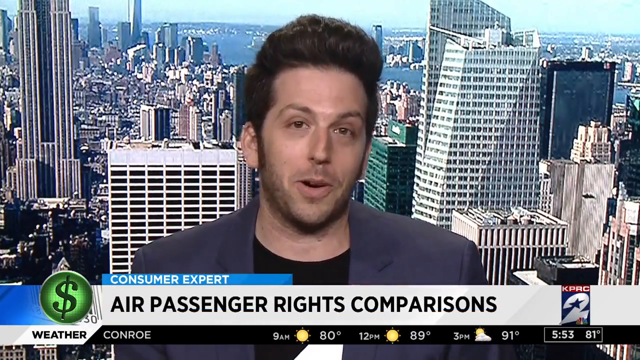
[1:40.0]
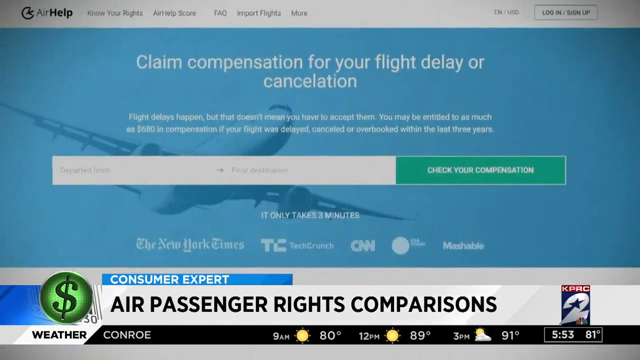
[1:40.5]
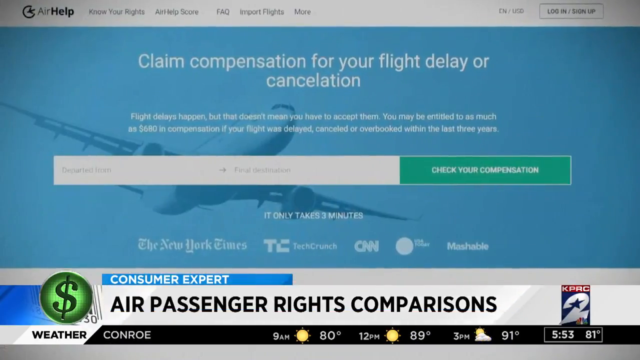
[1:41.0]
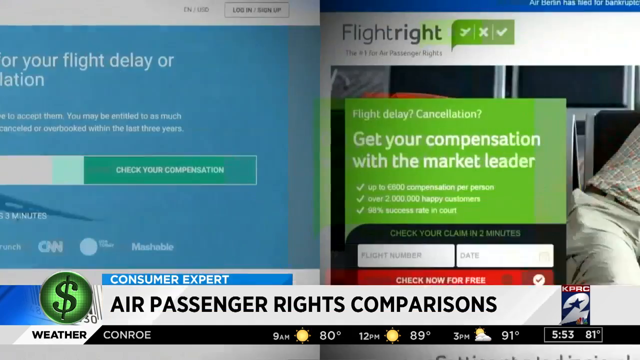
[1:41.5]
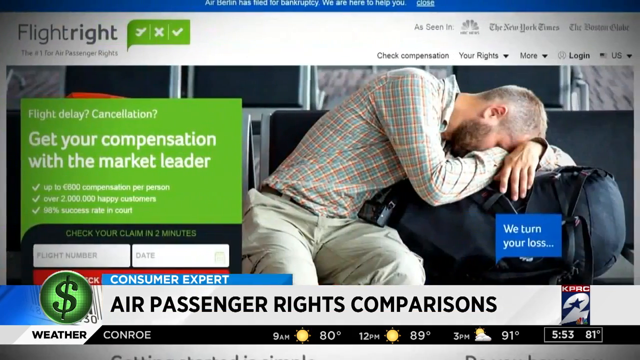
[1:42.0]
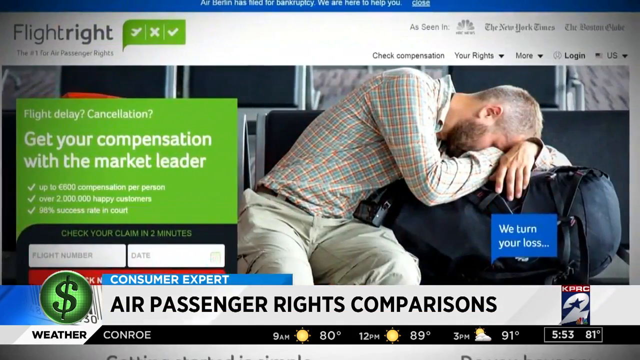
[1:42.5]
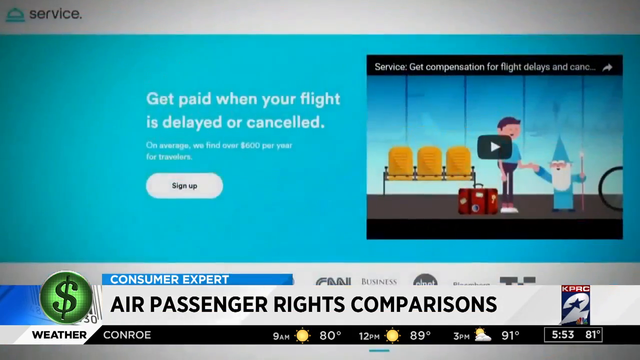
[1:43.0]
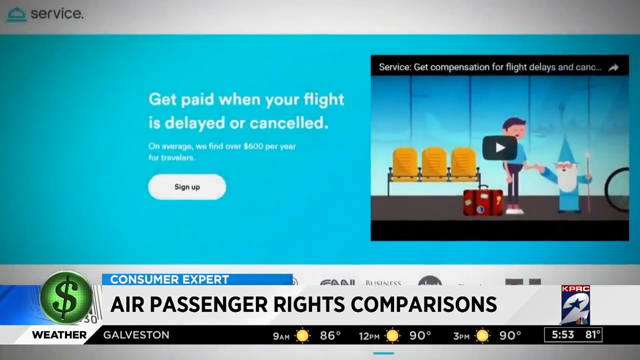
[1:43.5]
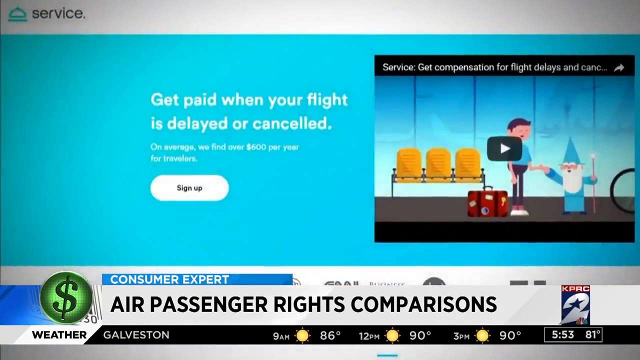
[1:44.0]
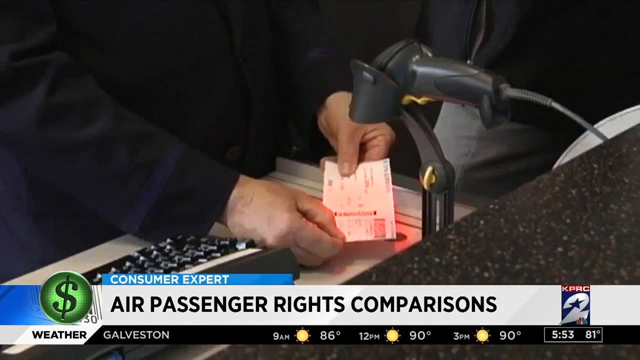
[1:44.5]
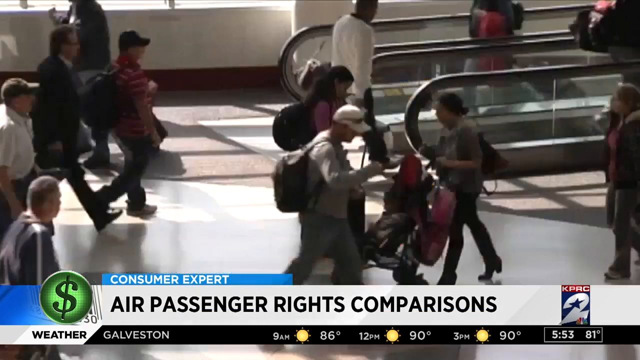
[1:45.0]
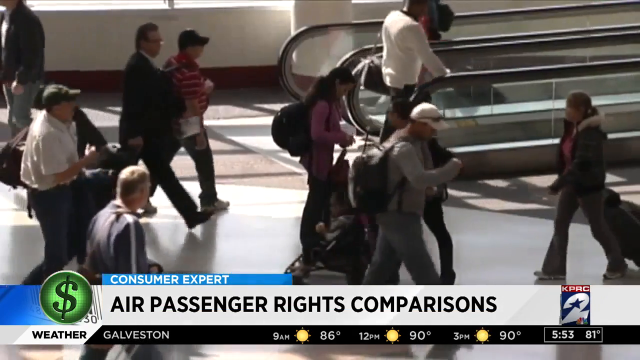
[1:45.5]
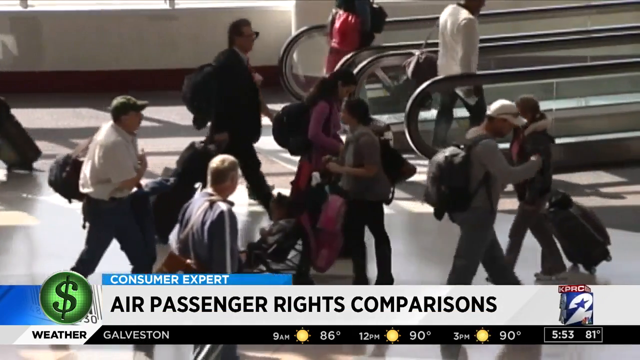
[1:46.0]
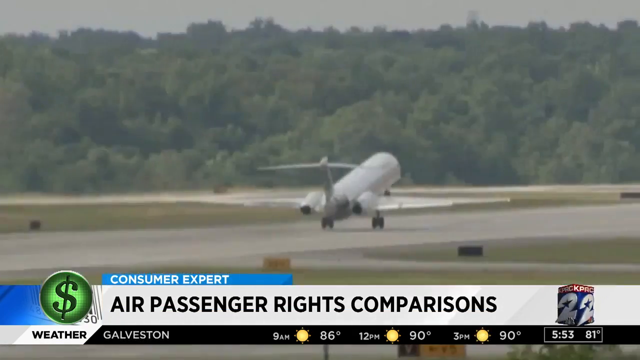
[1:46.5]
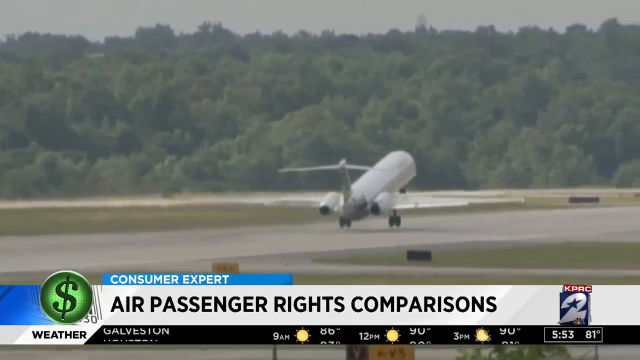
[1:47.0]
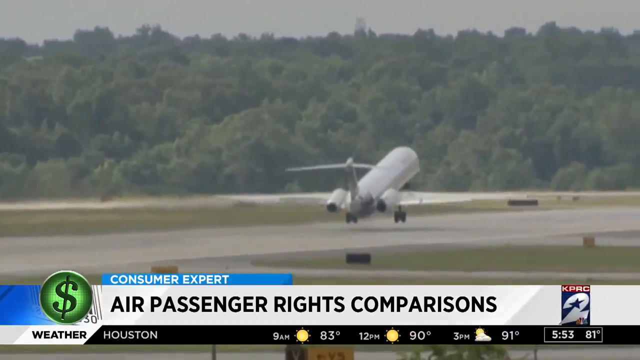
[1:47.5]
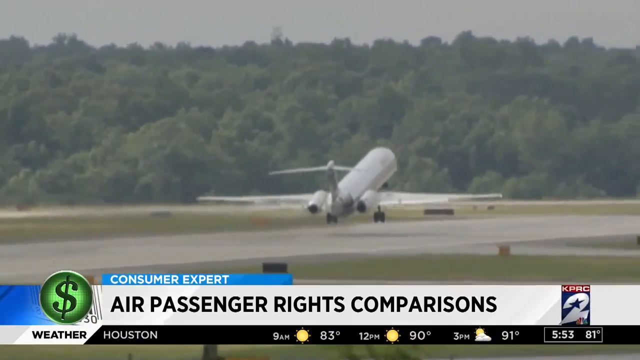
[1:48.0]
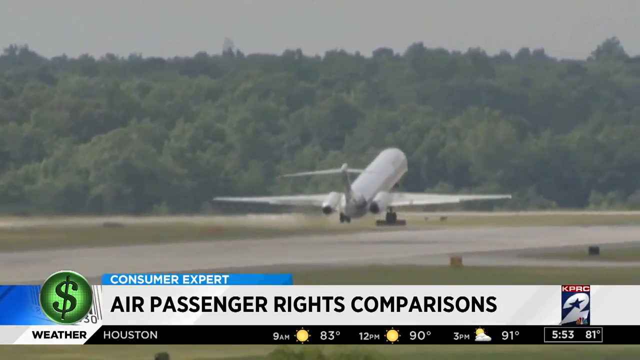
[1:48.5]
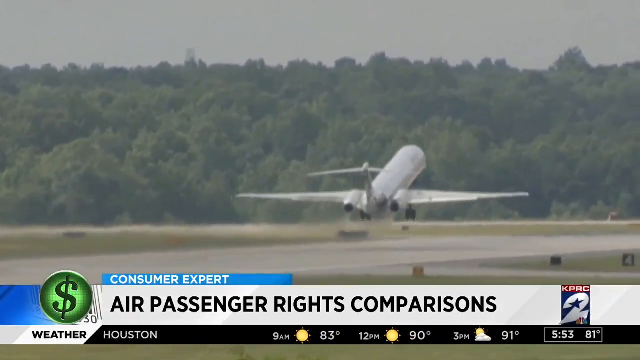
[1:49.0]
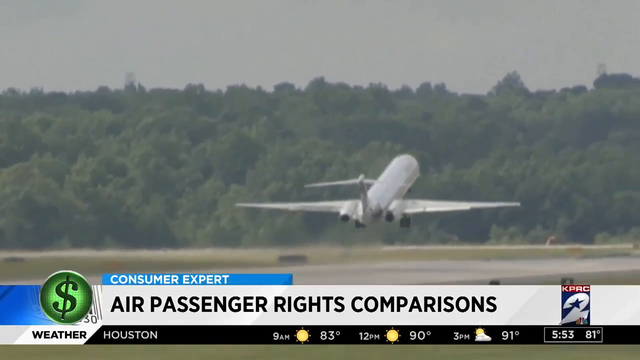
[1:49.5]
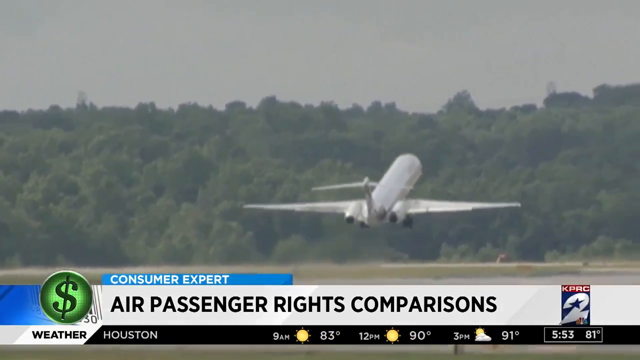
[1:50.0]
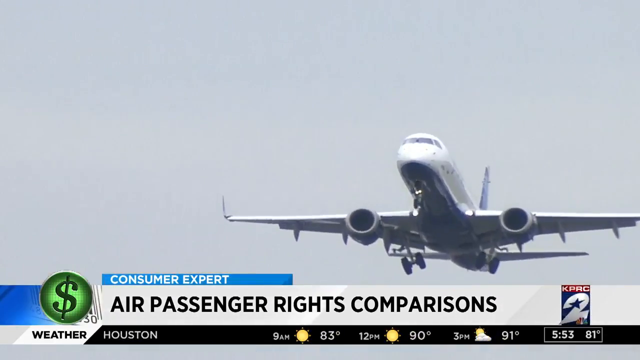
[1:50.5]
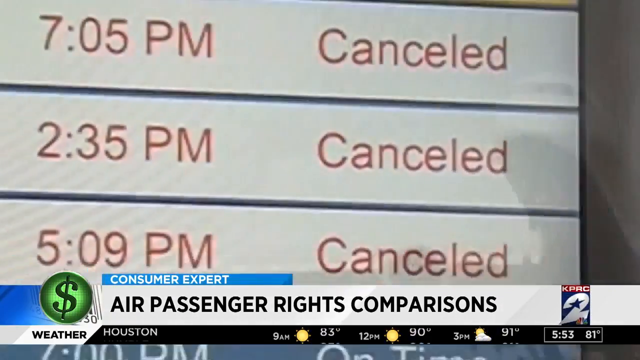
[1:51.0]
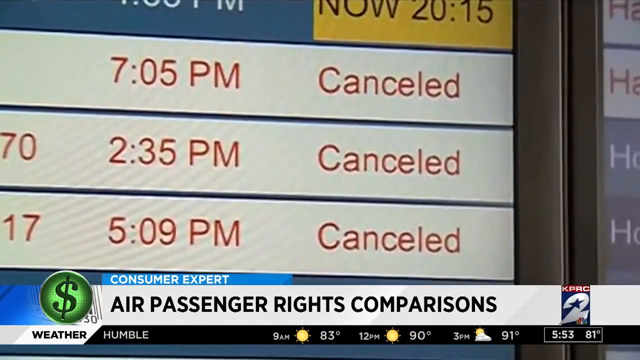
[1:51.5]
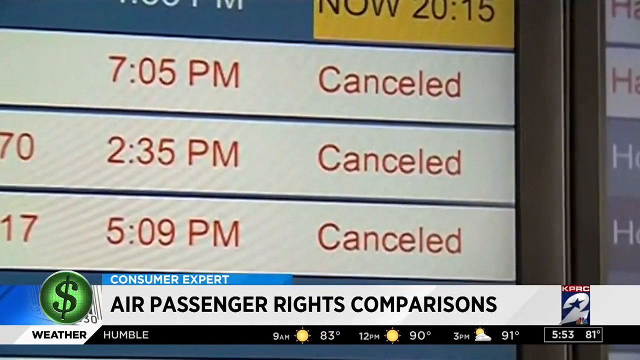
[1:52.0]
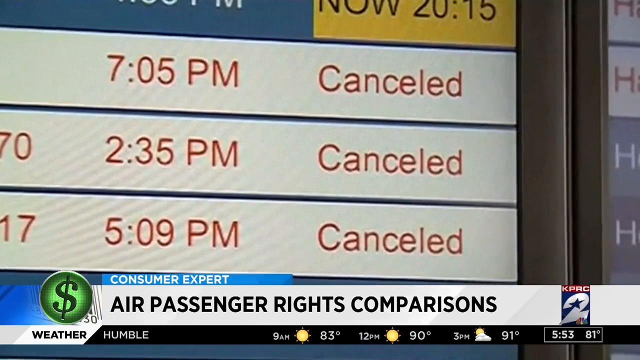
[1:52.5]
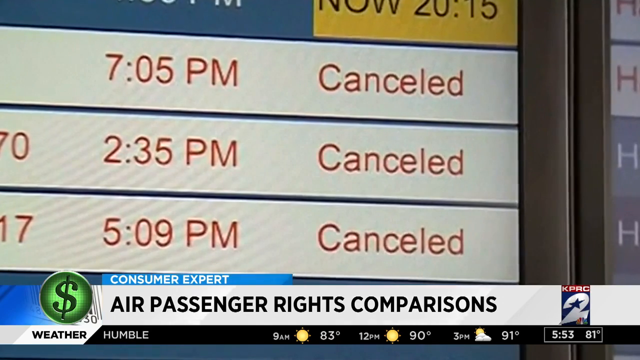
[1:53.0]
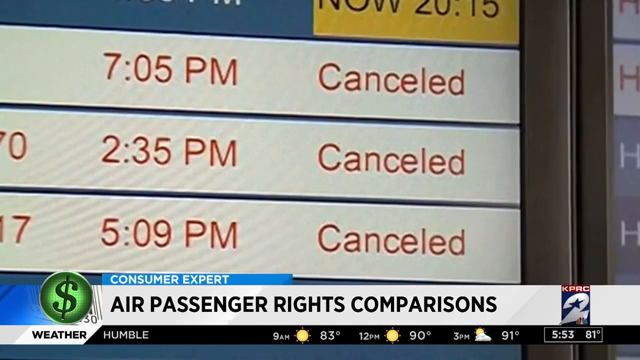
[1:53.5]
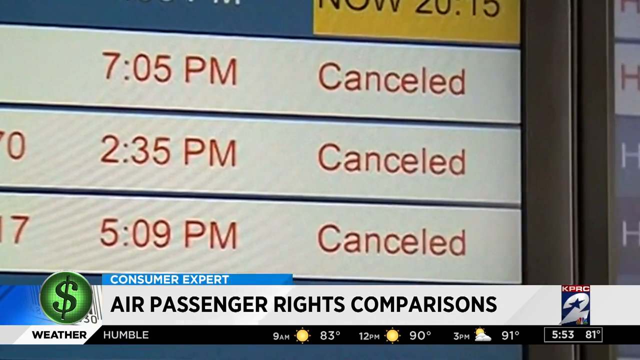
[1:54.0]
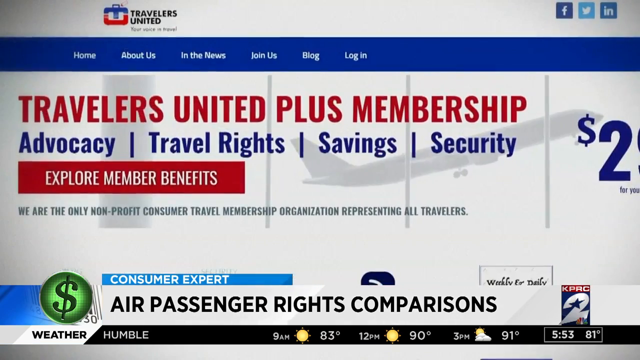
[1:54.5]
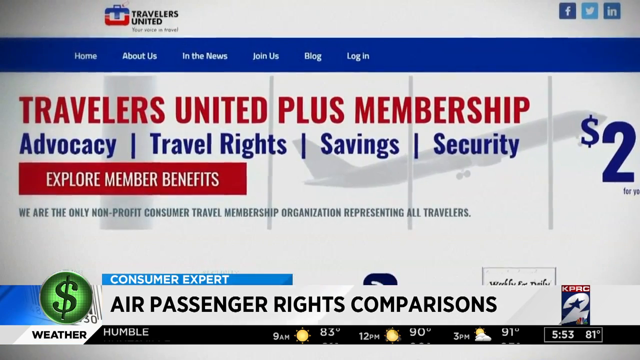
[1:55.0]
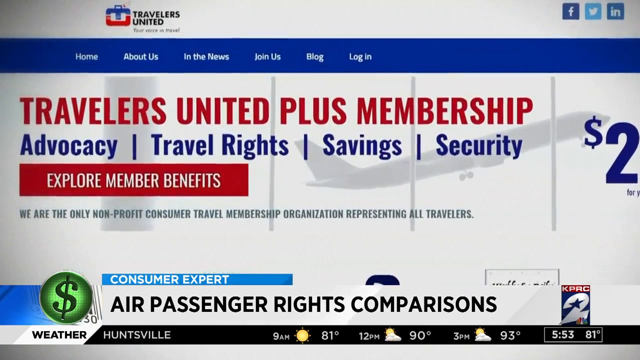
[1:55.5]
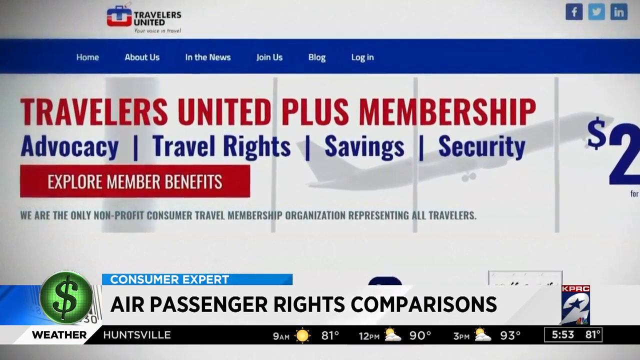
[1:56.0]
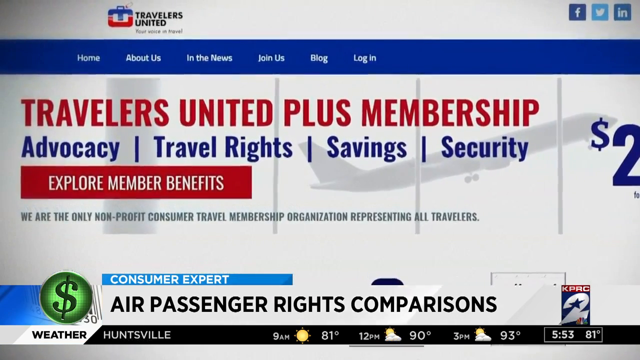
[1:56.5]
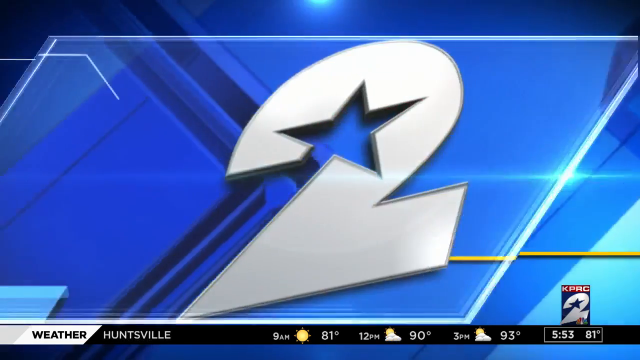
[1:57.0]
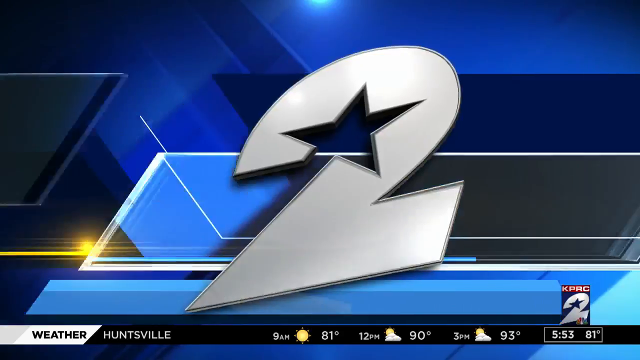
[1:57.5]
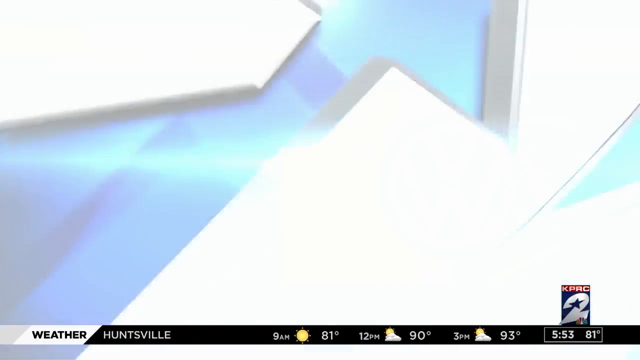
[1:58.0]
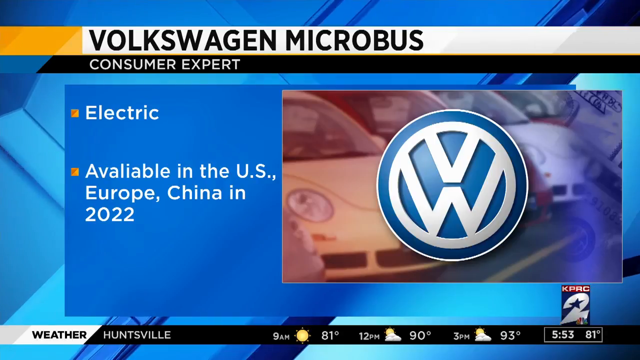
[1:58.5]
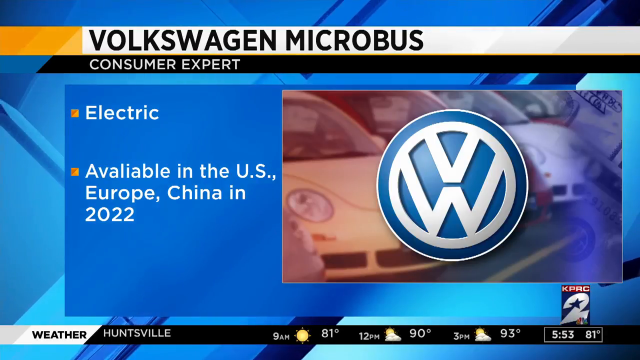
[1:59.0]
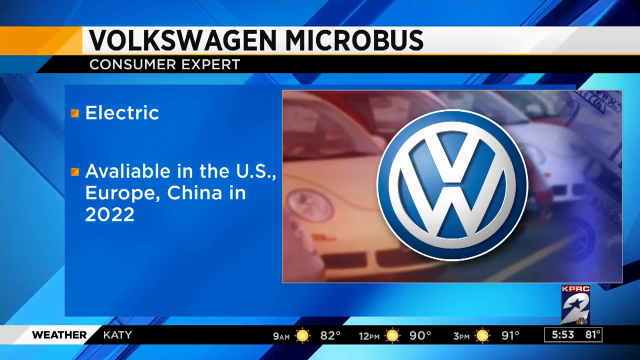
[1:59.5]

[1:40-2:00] The AirHelp website is shown, with menu items including "know your rights" and "airhelp school". On a green and blue screen, text reads "claim compensation for your flight delay or cancellation", "Flight delays happens, but that doesn't mean you have to accept them", and "You may be entitled to as much as $680 in compensation if your flight was delayed, canceled, or overbooked within the last three years", with a search box to check whether one qualifies for compensation. Another website, flight right, shows in green a sign of an airplane, an X, a plus and a tick in a rectangular box, with text including "flight delay?", "cancellation?", "get your compensation with a market leader", "up to 500 compensation per person", "over 2 million happy customers" and "check your claim in two minutes". A man in khaki pants lies down at an airport with his luggage, looking exhausted, apparently because his flight was delayed, and a blue sign reads "we turn your loss into money". Another website shows "get paid when your flight is delayed or canceled", with a person with luggage at the airport being helped by a little man in blue with a white beard who looks like a mini Santa Claus.